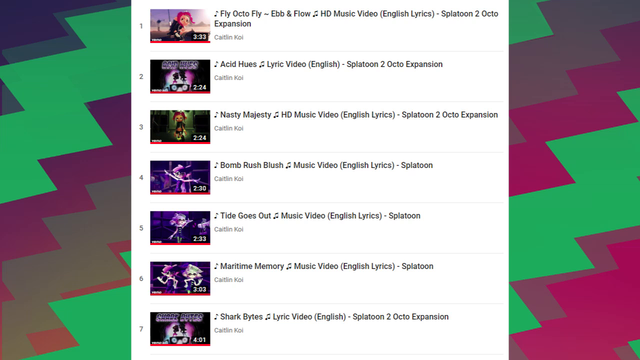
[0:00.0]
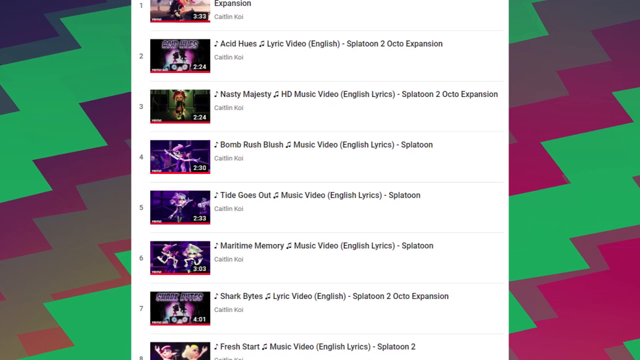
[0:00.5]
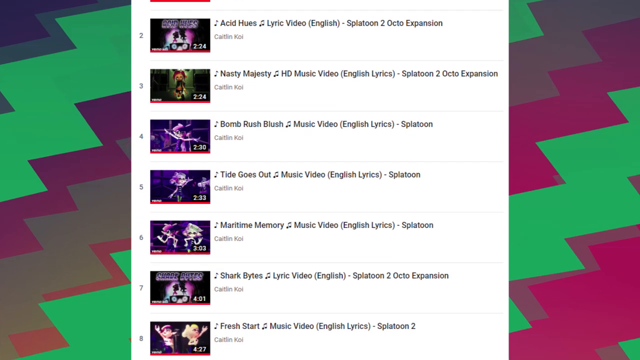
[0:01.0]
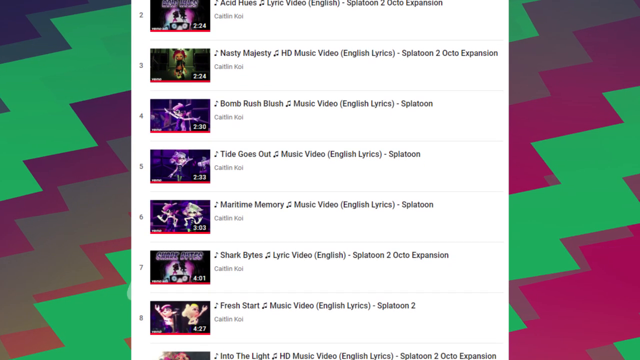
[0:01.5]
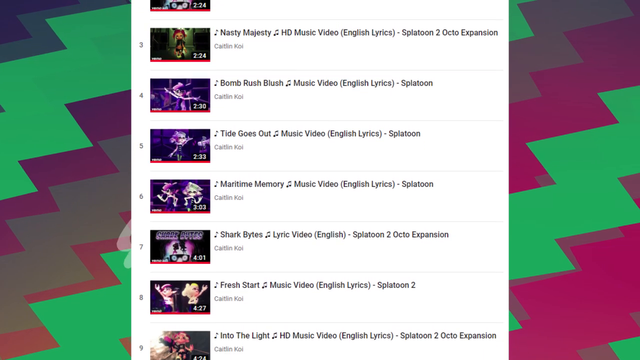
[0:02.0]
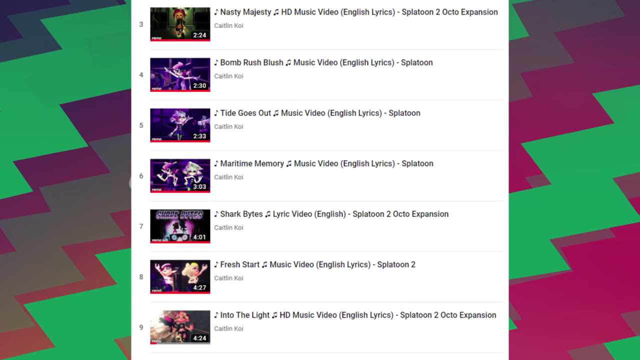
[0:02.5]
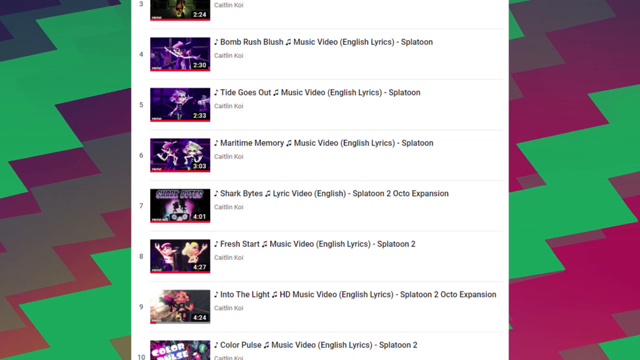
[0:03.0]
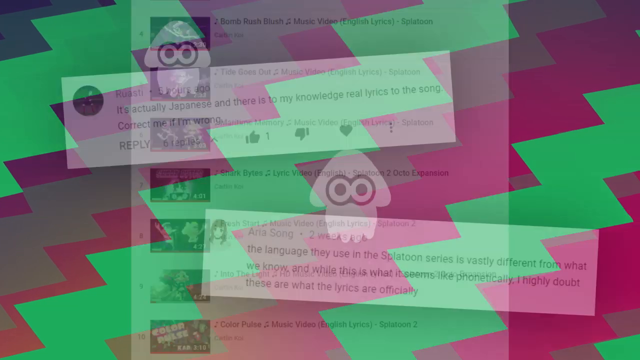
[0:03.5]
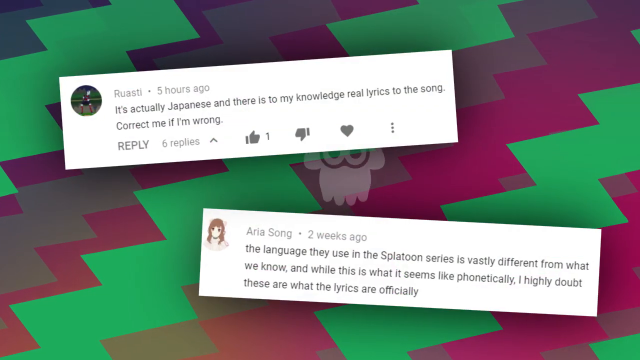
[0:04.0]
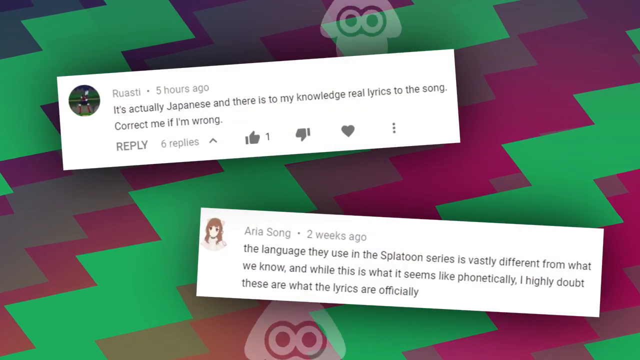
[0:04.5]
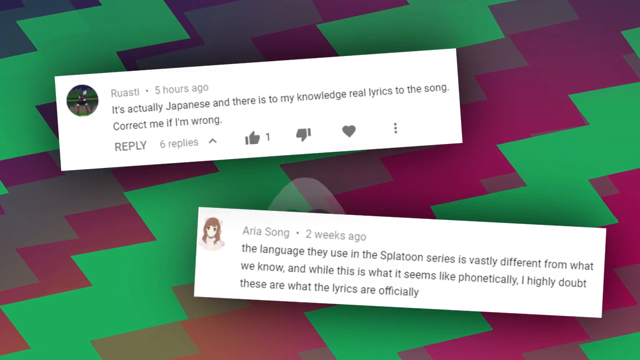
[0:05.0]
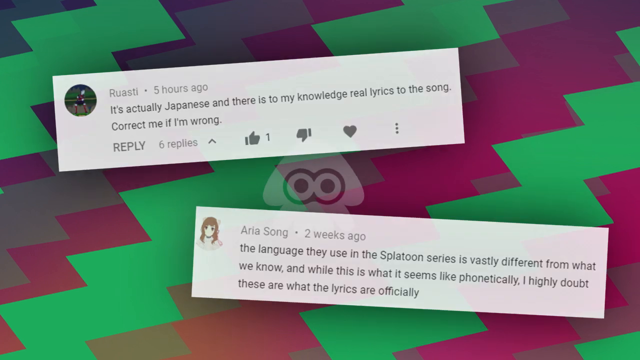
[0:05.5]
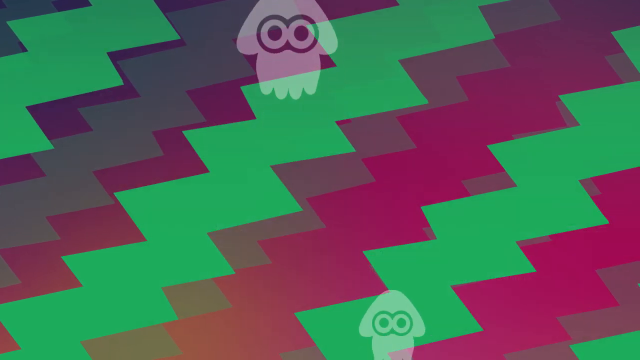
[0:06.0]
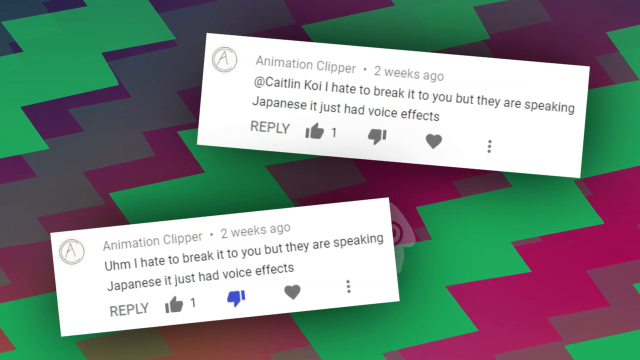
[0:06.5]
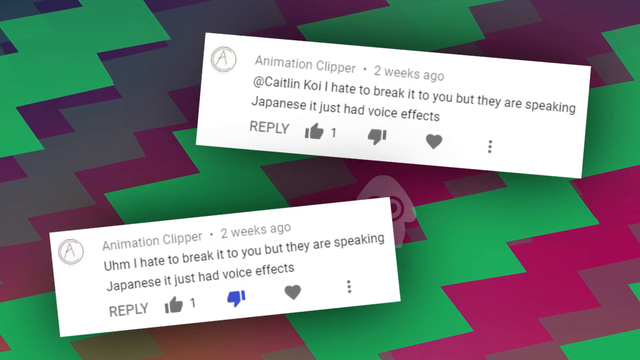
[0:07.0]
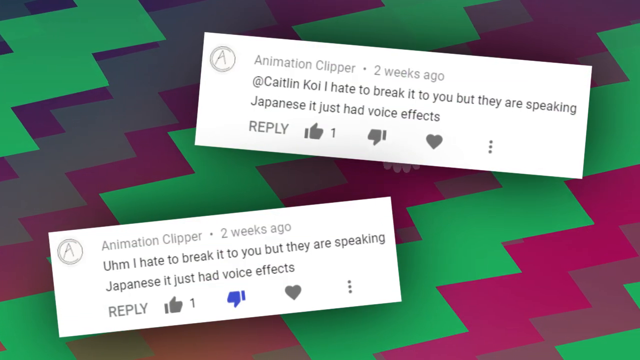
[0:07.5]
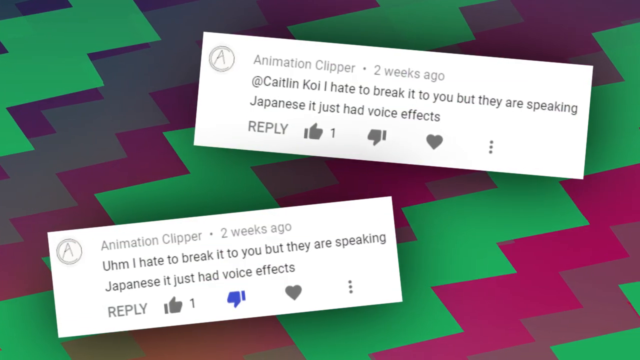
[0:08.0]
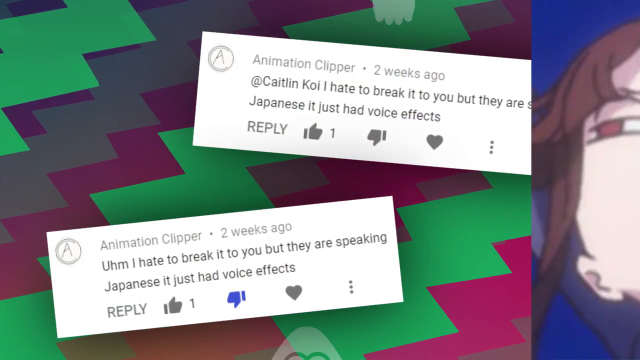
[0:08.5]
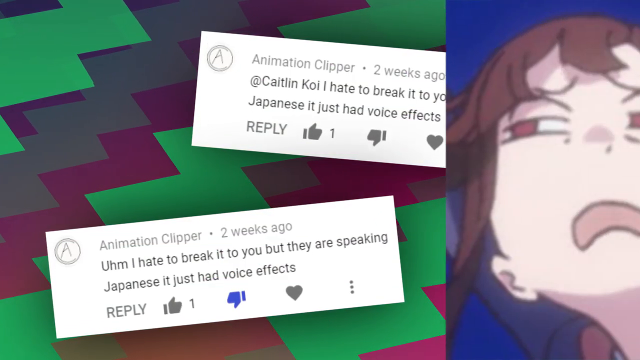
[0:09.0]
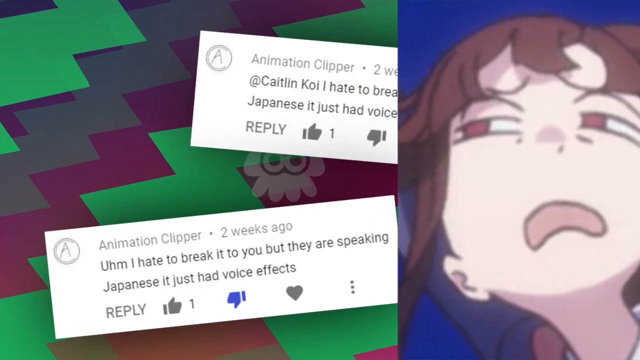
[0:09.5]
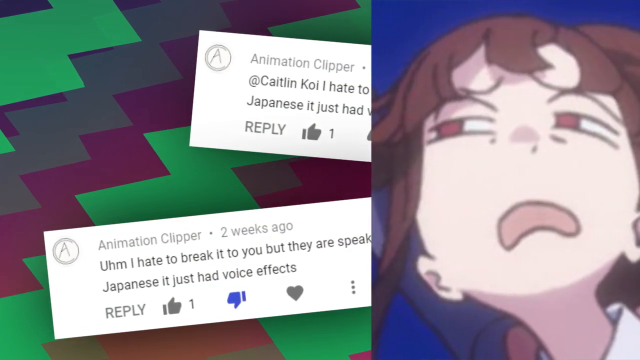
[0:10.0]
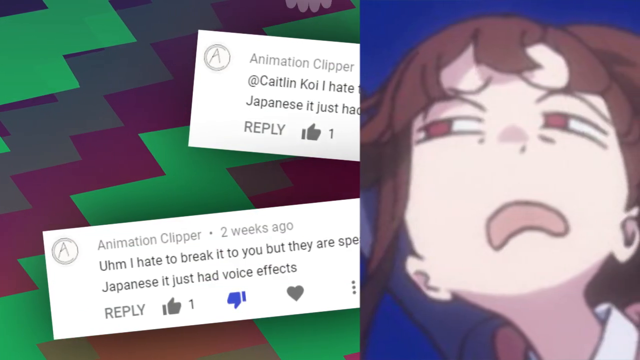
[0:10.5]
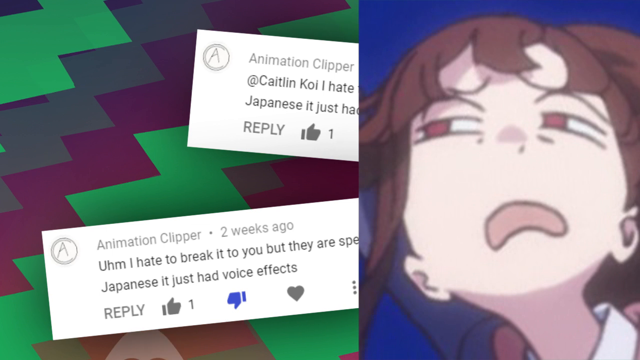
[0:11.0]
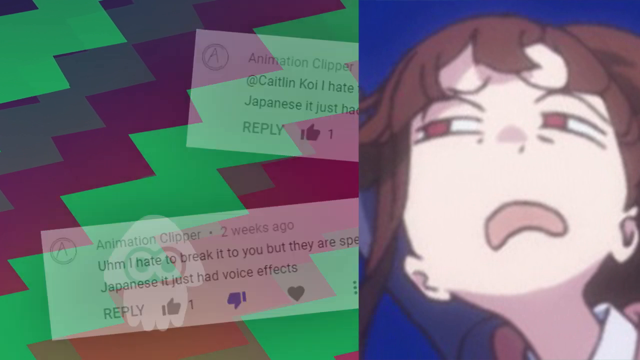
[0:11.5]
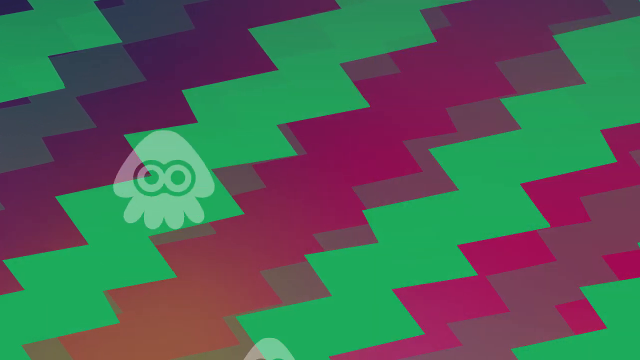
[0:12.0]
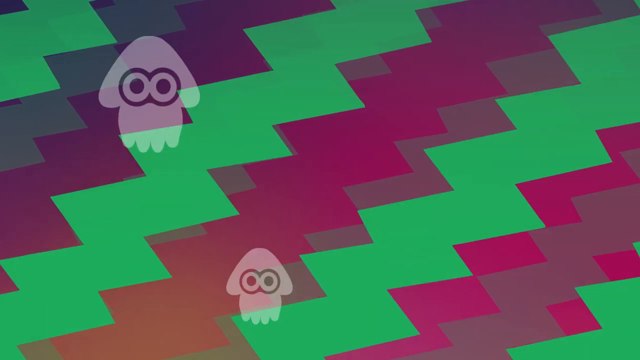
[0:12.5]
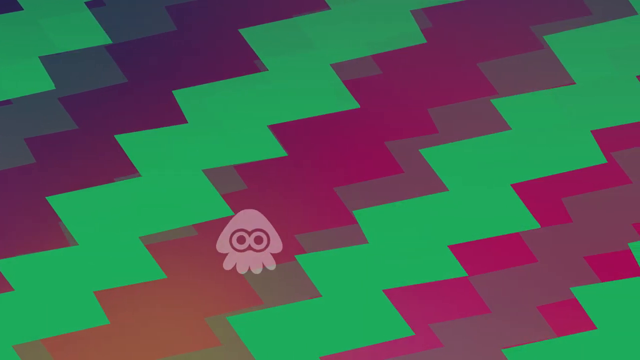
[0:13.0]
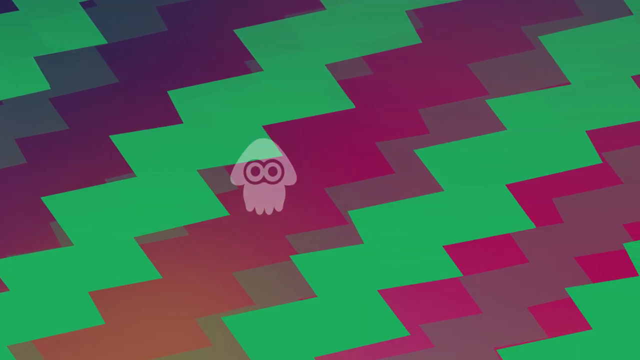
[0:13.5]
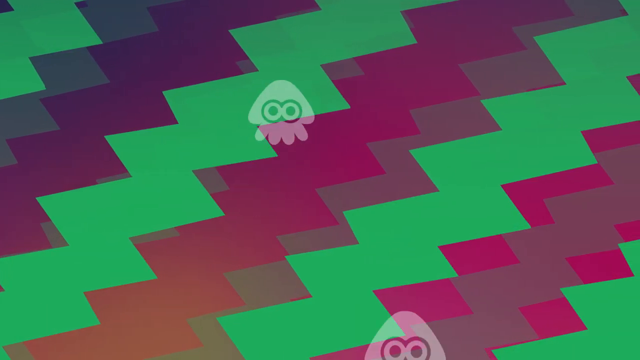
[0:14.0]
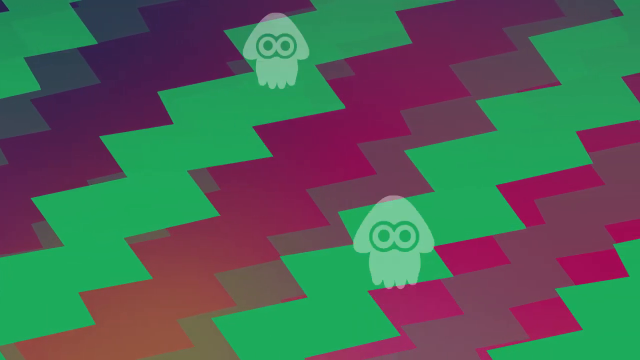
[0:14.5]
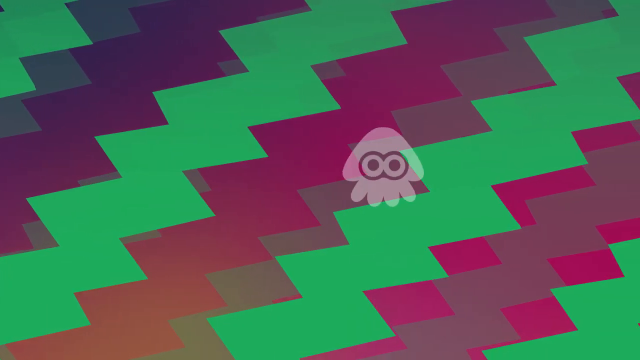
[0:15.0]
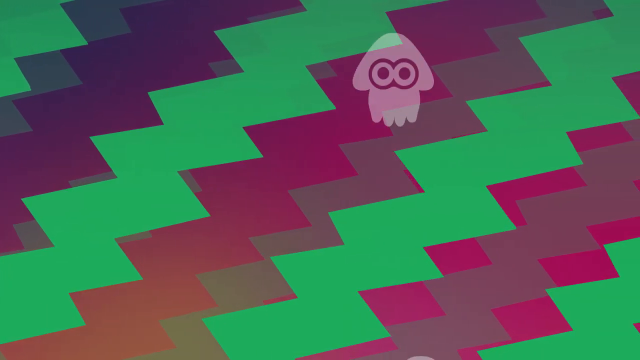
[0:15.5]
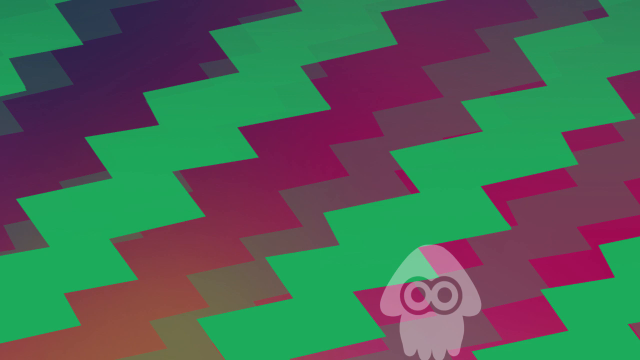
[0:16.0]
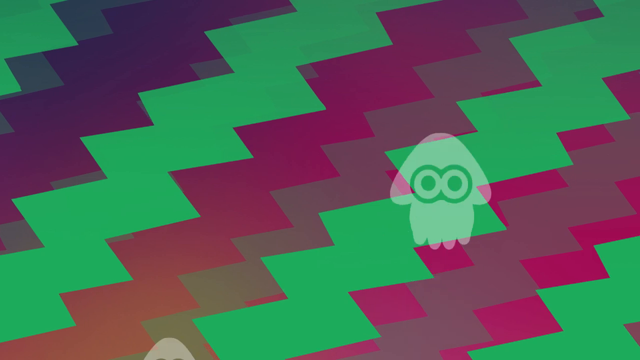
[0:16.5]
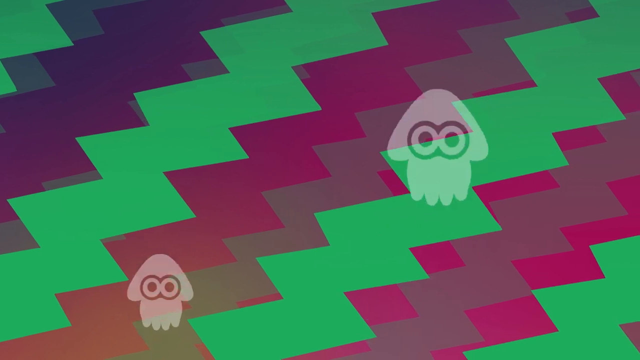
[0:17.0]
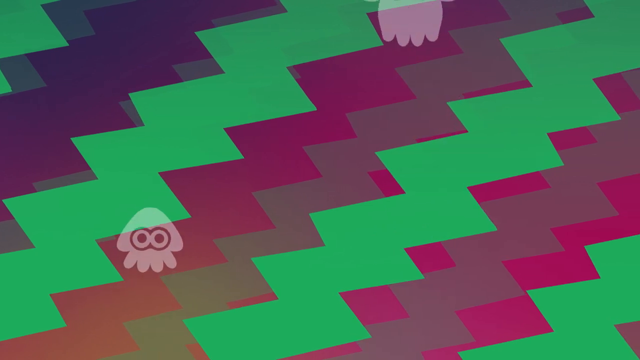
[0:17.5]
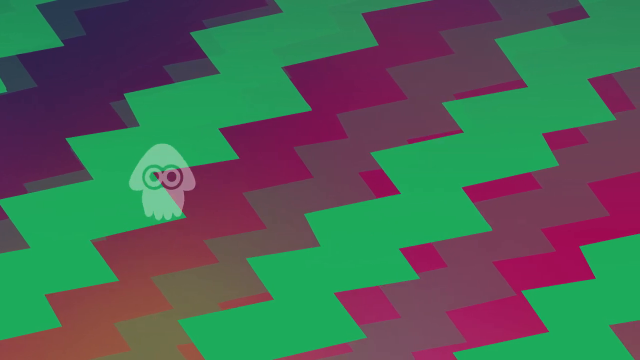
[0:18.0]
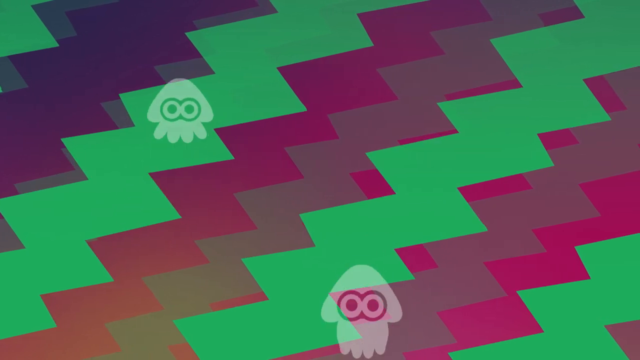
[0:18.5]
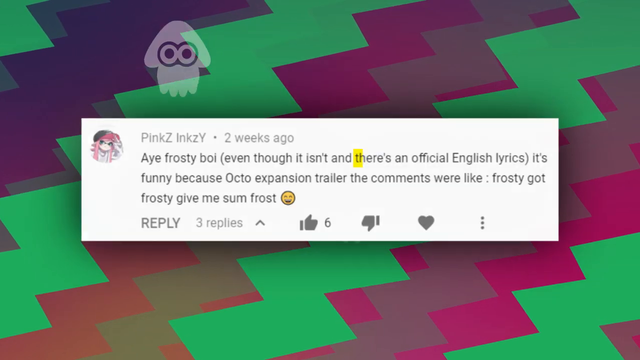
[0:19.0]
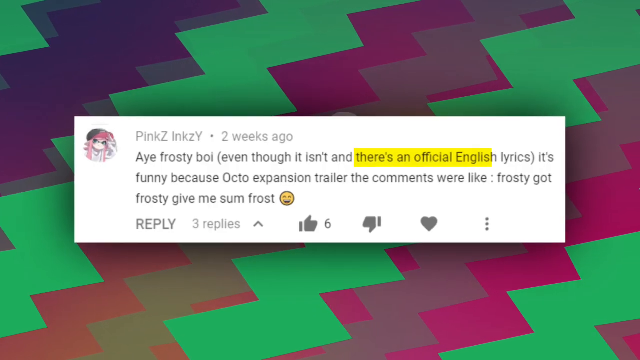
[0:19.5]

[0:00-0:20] Comments from a video are visible, along with a cartoon character; it seems to show some ocean animals, though what they are is unclear. Many videos appear, with different kinds of comments. Words are written in what appears to be Japanese, and the video seems to be about Japanese videos.